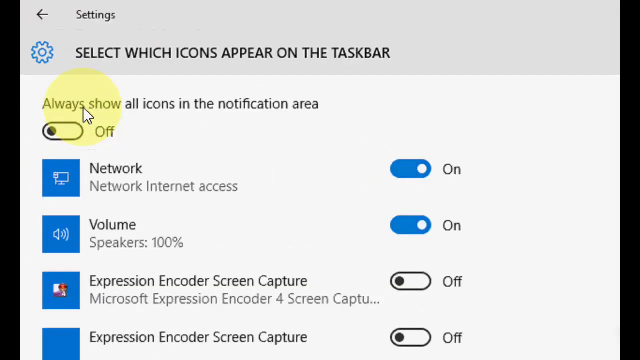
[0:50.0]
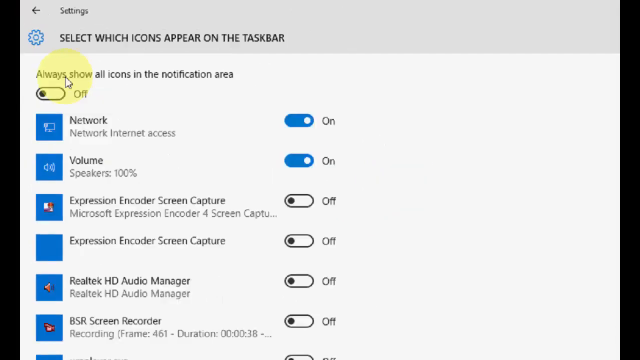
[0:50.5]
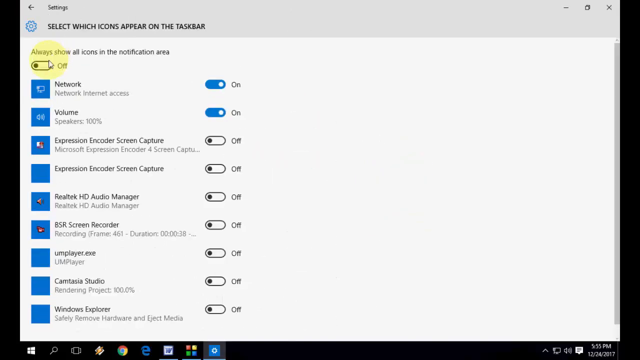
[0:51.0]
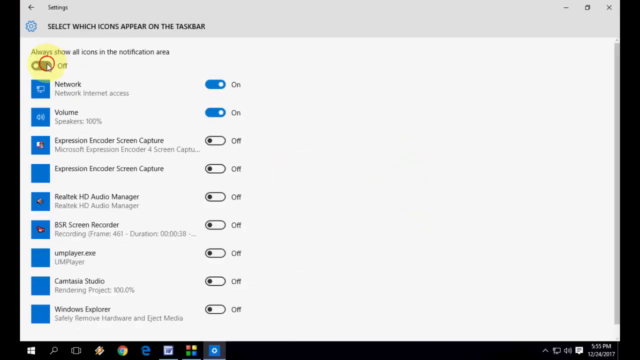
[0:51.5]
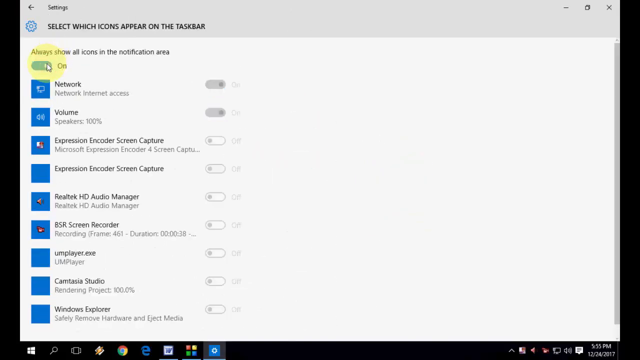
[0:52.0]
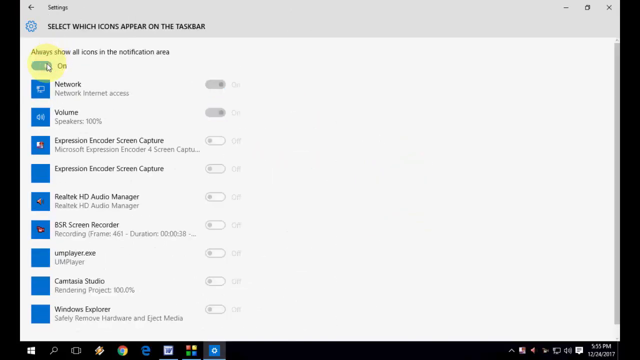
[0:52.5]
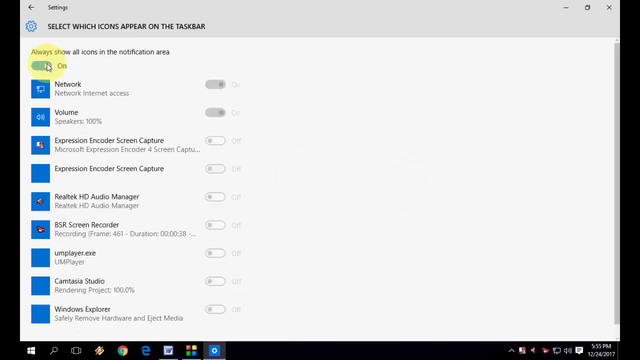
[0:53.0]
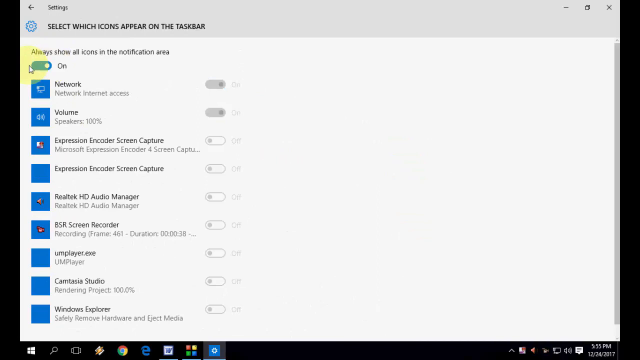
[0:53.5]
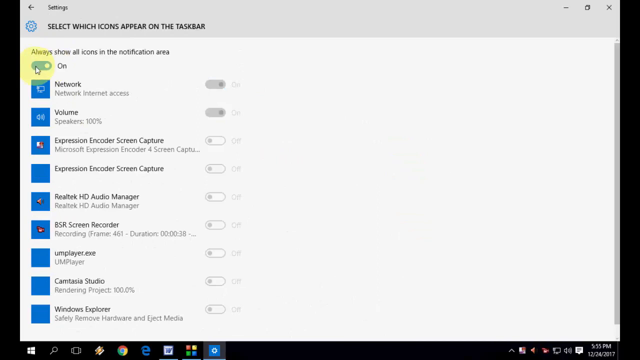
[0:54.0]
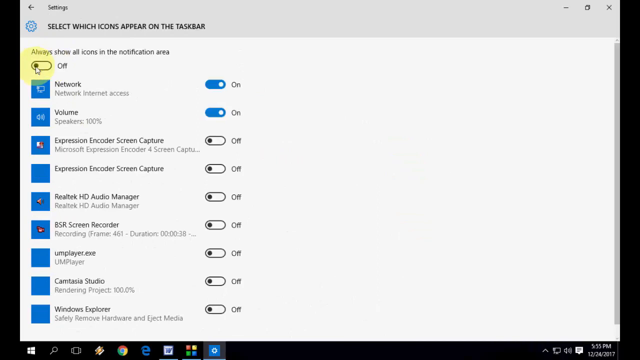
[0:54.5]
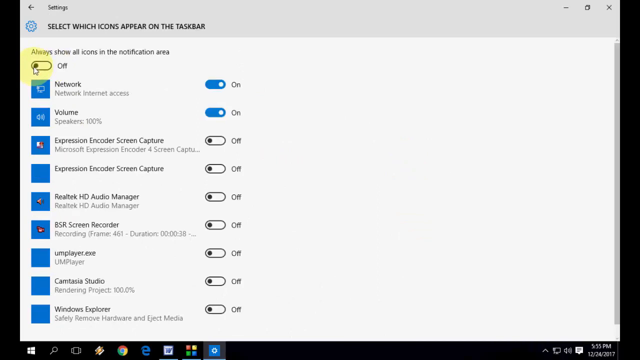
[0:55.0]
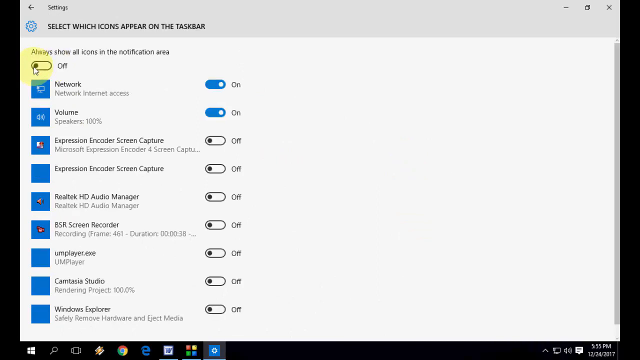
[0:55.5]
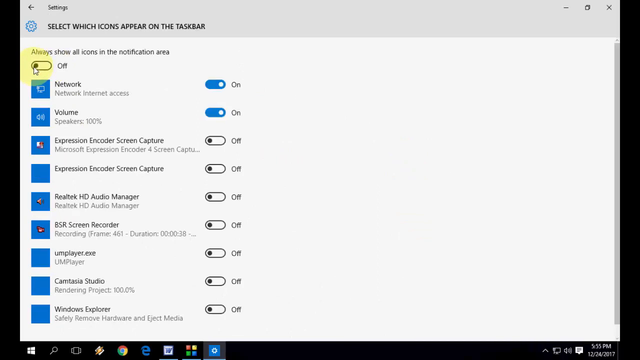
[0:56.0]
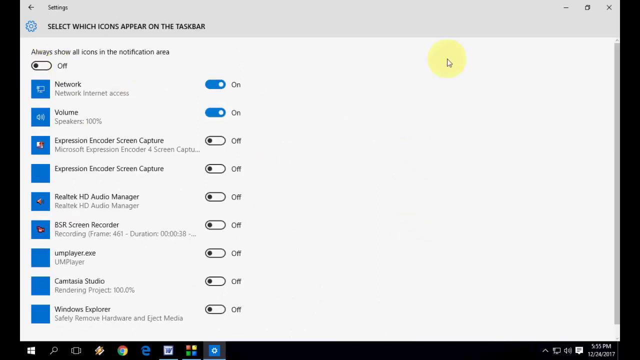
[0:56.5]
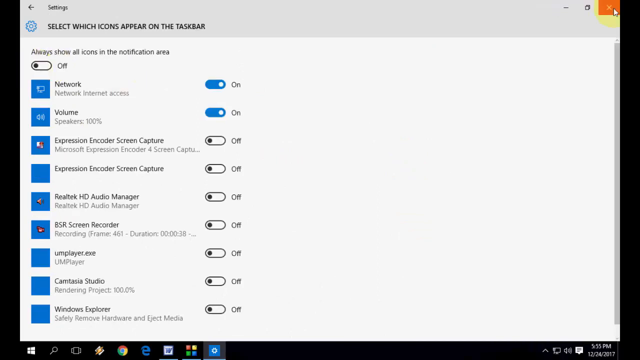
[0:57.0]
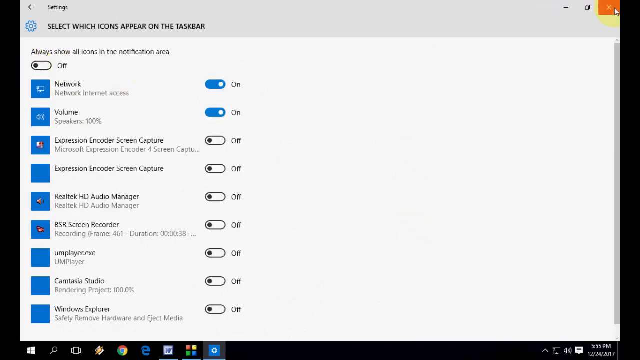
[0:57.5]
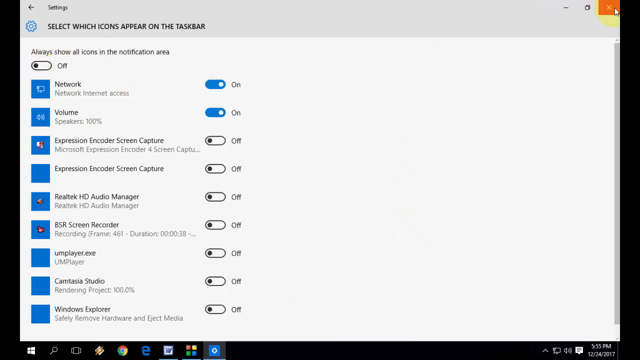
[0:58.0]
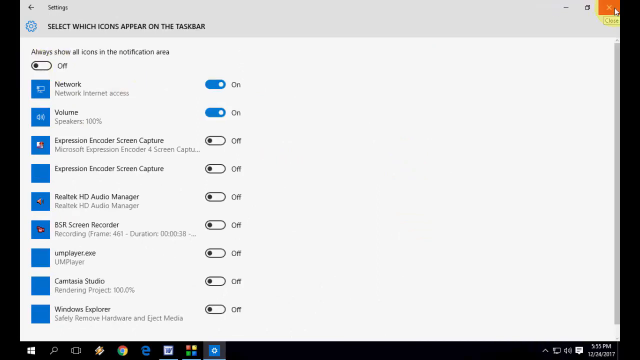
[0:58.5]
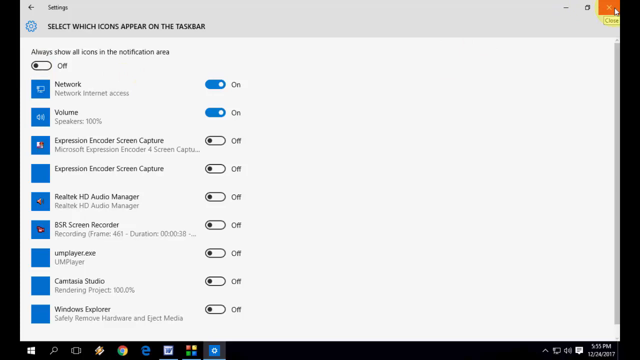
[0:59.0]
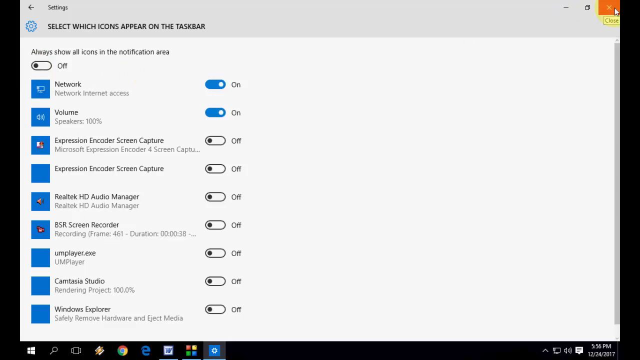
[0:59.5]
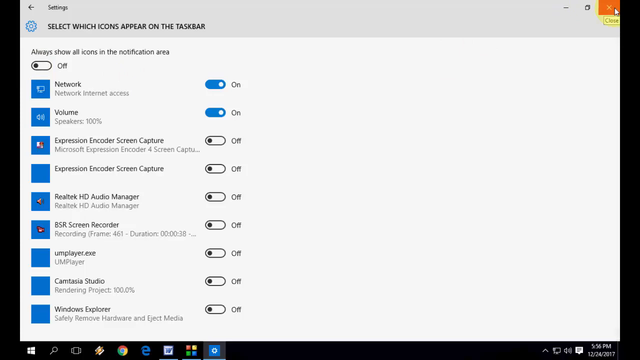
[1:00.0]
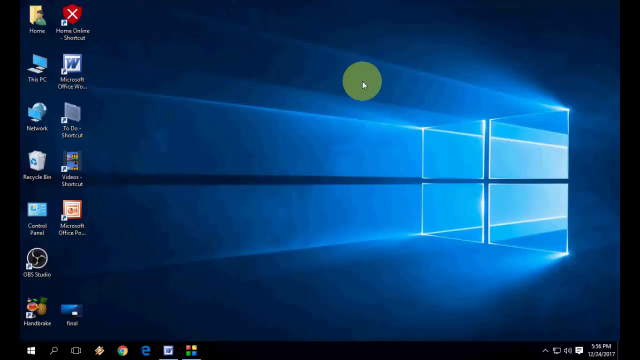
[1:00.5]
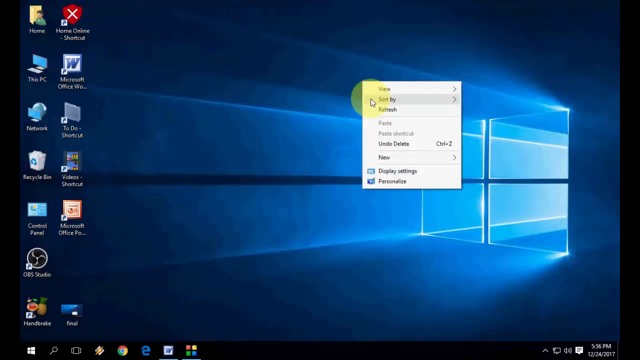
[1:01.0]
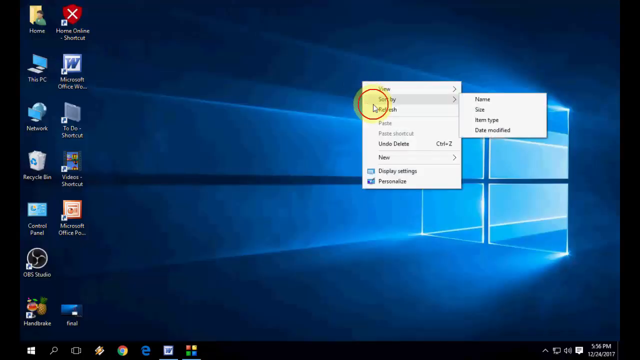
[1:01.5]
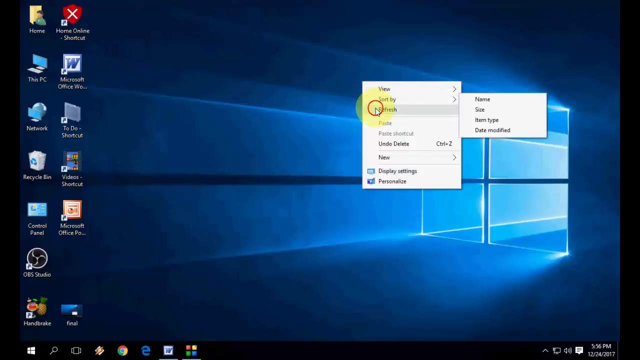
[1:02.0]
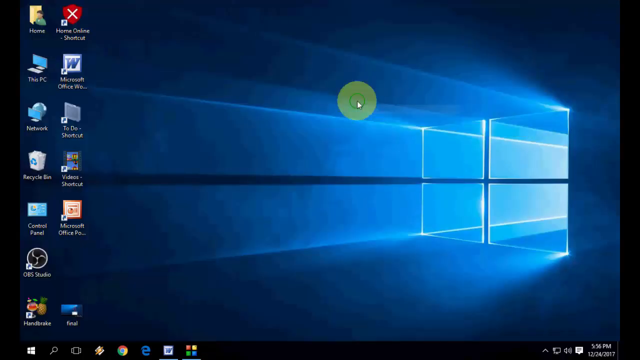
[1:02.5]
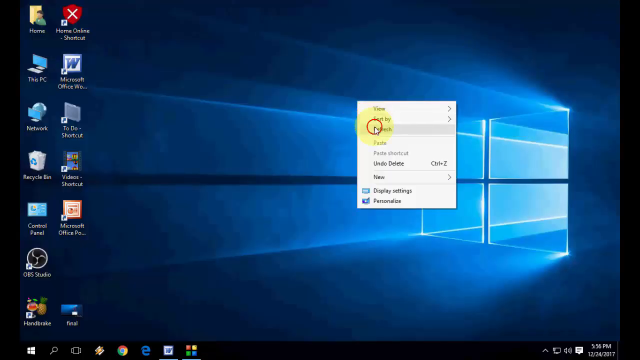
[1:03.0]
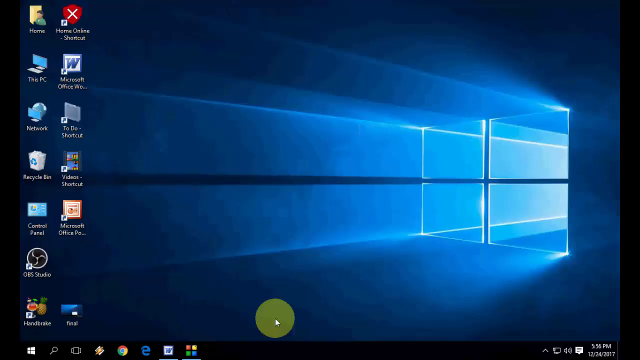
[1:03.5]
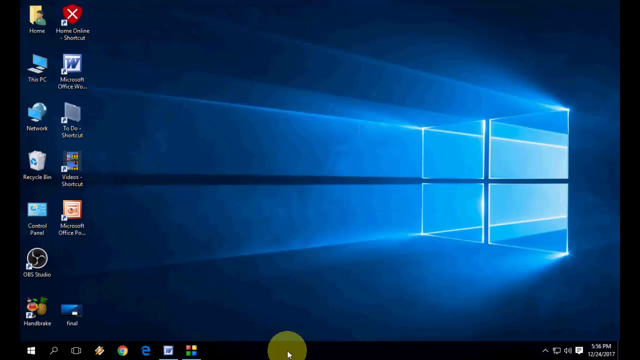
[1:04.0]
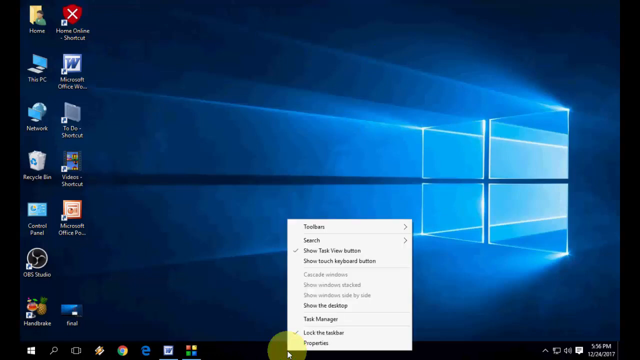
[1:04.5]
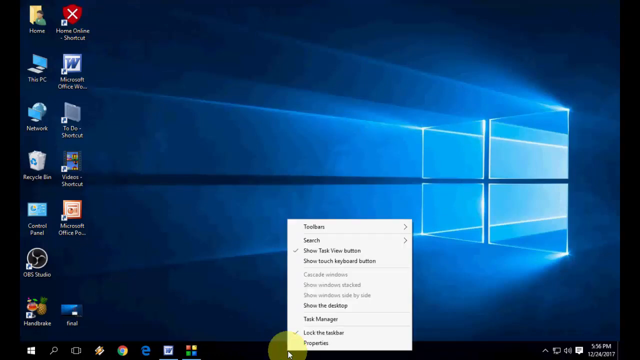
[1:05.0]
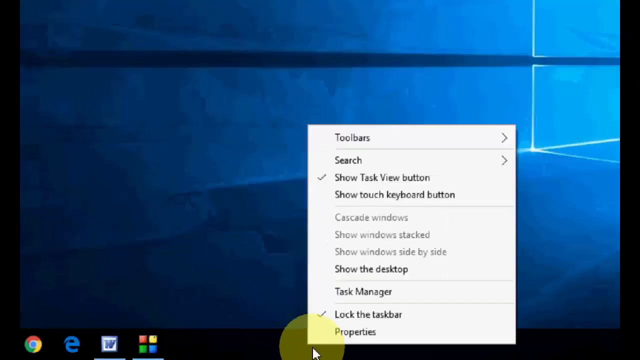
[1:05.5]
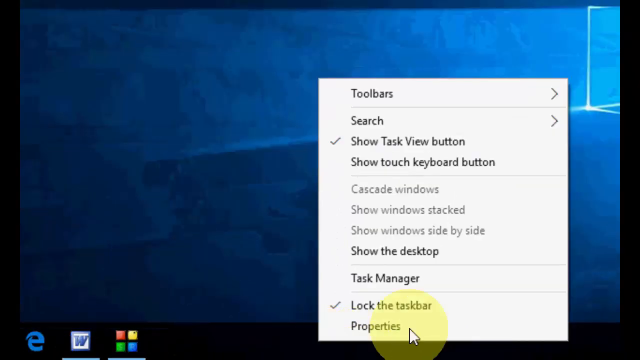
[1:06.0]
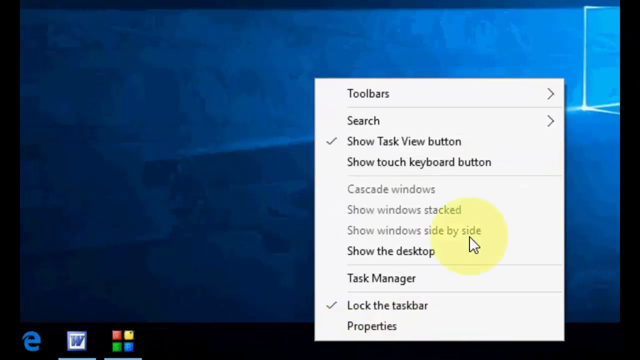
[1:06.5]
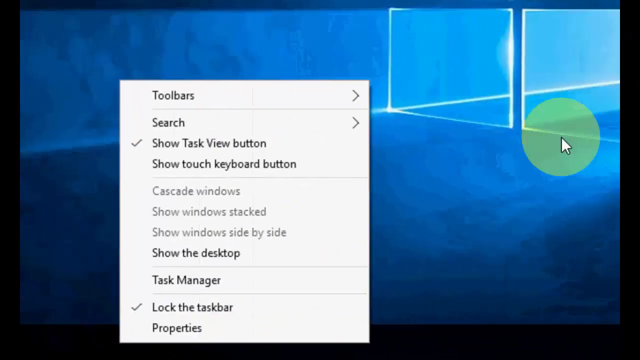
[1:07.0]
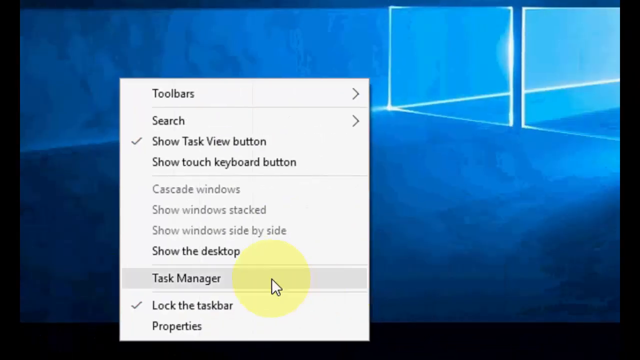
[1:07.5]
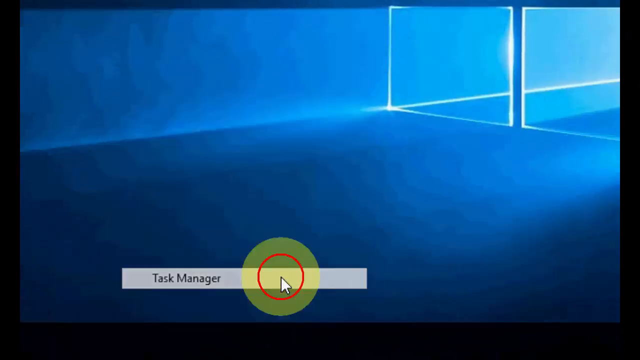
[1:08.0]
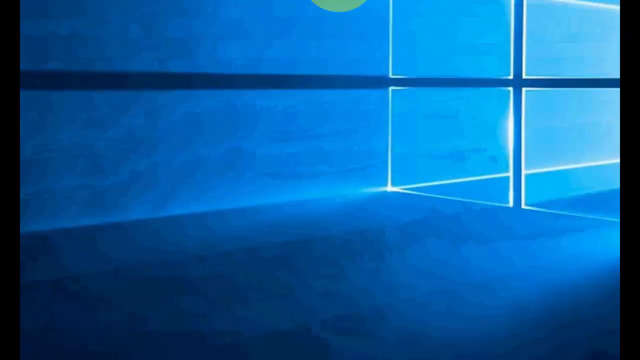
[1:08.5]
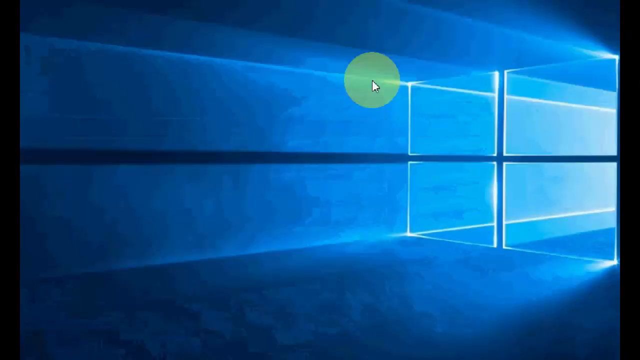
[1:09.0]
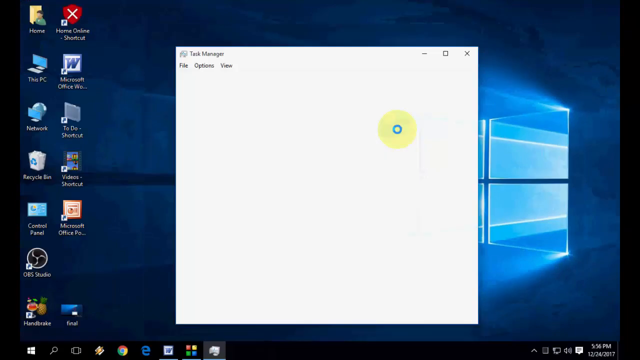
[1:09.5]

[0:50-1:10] In the settings, the user clicks the button that says "always show all icons in the notification area" to turn it on, then clicks it again to turn the option off. Many notifications are listed, but only some of them are shown in the bottom right of the desktop. He closes the settings, refreshes the desktop, then right-clicks the bottom bar of the desktop and opens Task Manager, where he seems to try to do something.